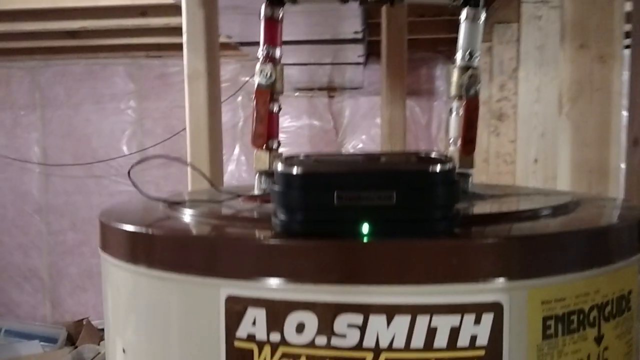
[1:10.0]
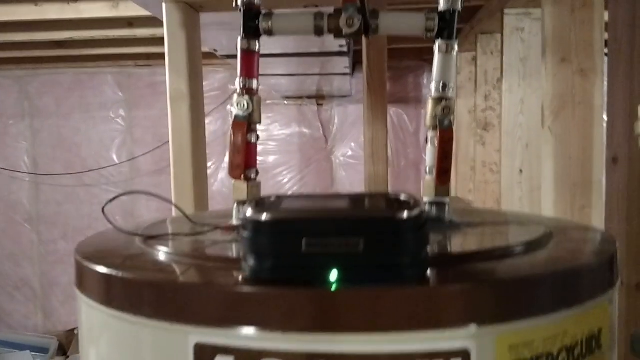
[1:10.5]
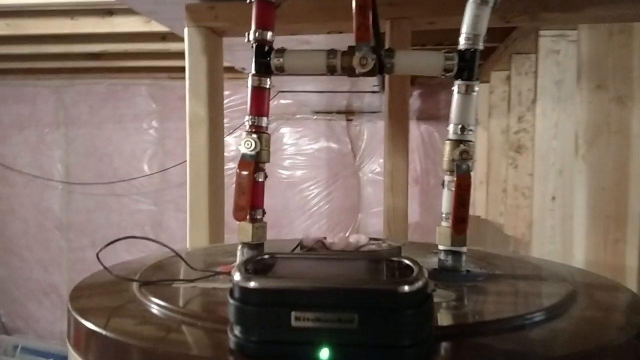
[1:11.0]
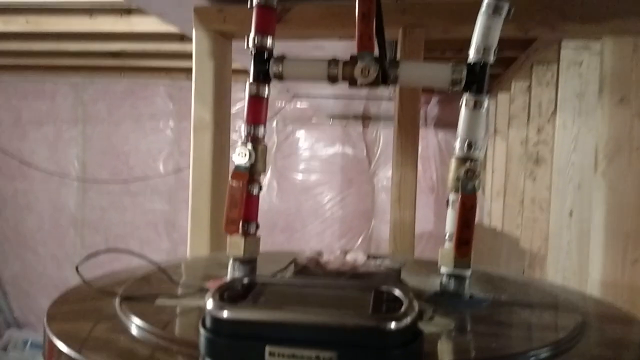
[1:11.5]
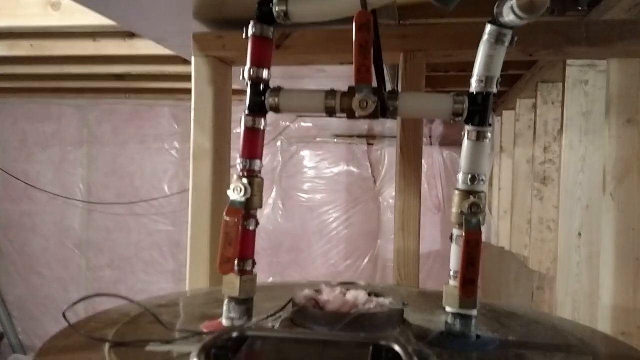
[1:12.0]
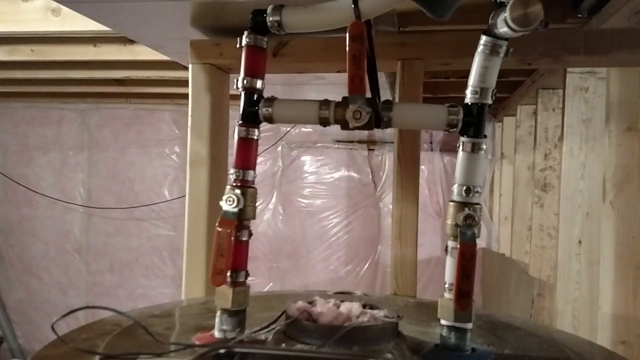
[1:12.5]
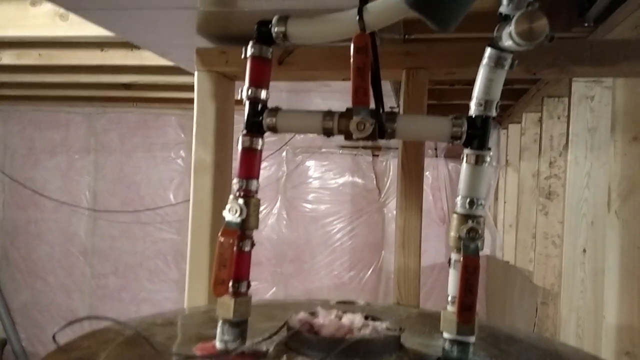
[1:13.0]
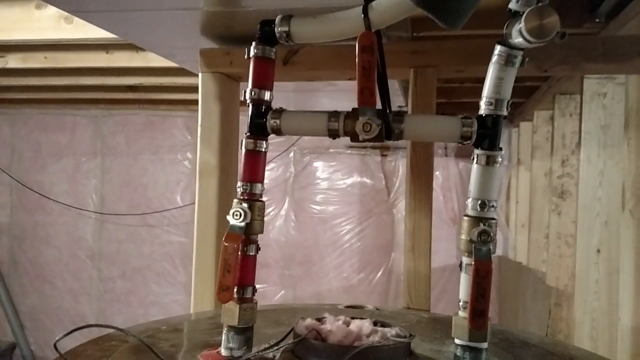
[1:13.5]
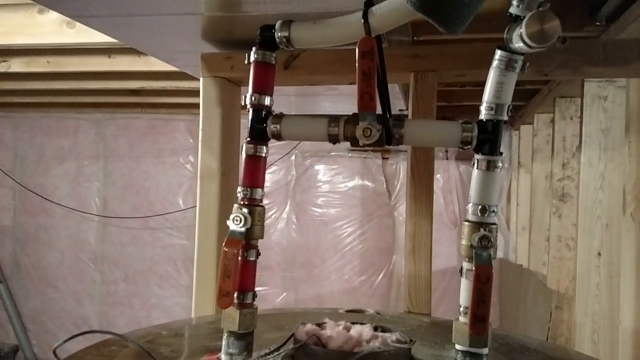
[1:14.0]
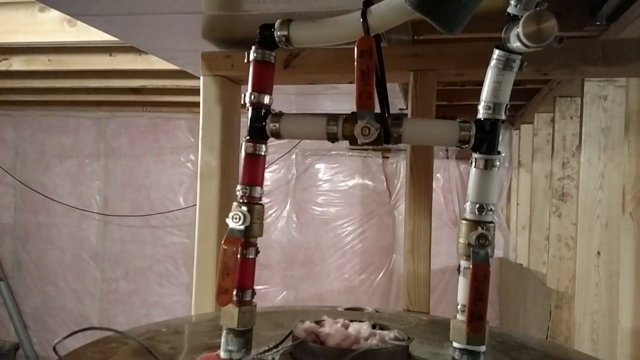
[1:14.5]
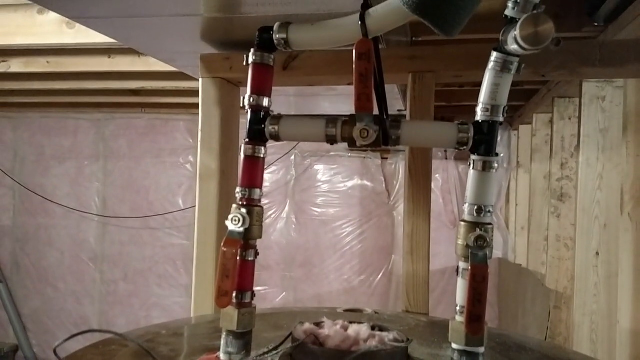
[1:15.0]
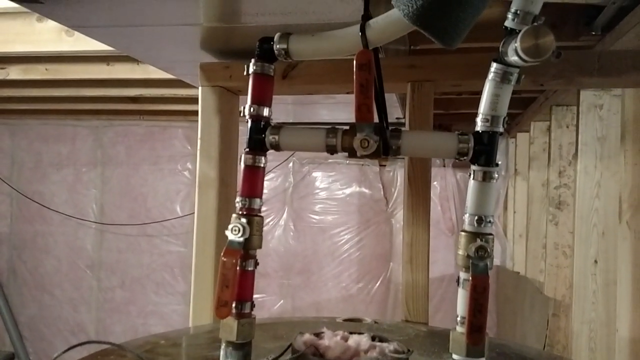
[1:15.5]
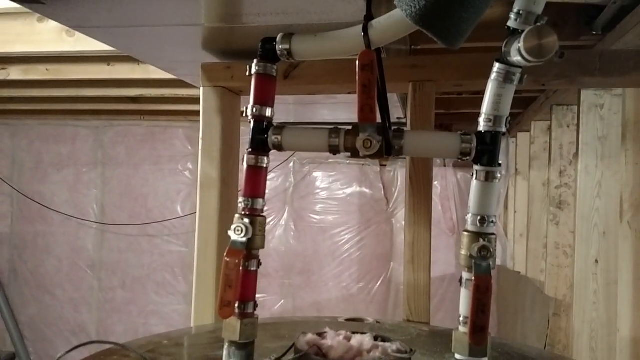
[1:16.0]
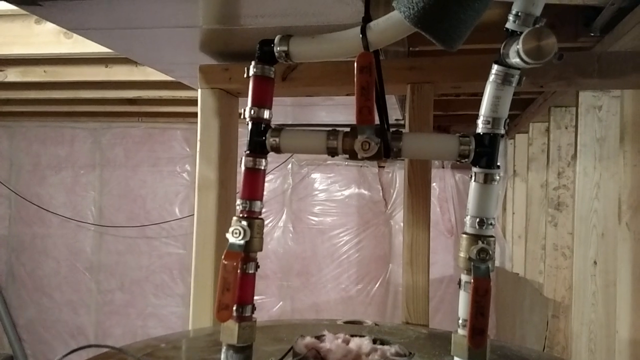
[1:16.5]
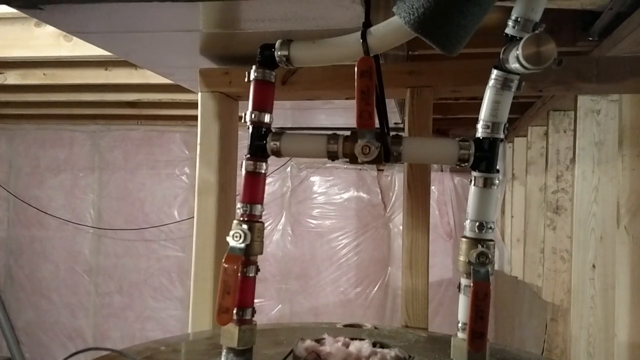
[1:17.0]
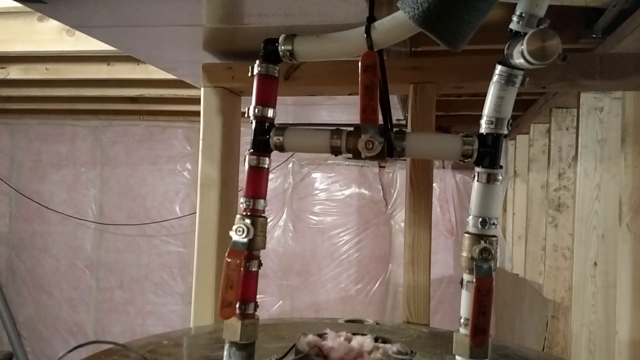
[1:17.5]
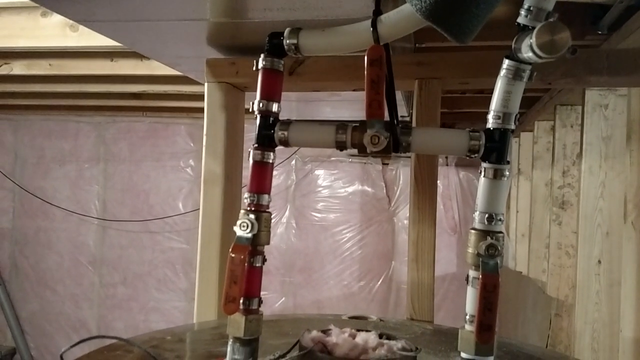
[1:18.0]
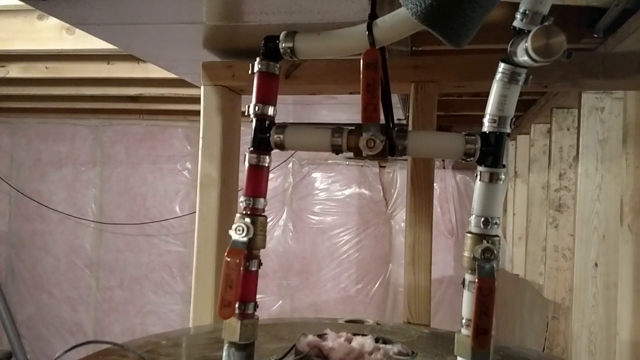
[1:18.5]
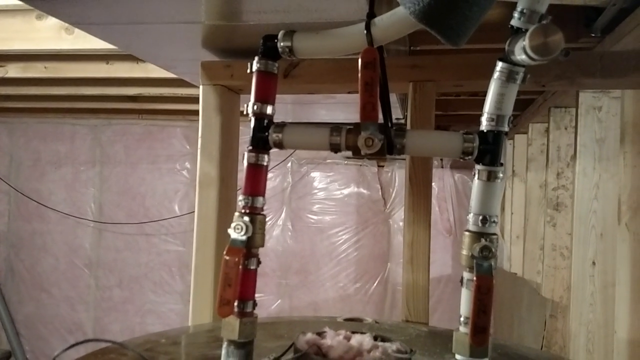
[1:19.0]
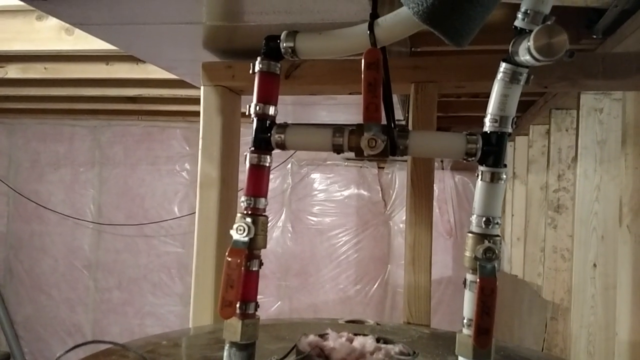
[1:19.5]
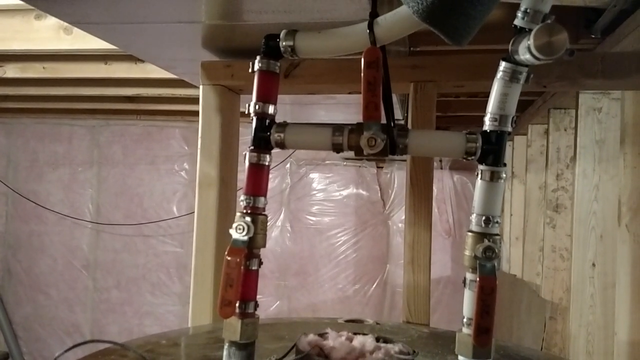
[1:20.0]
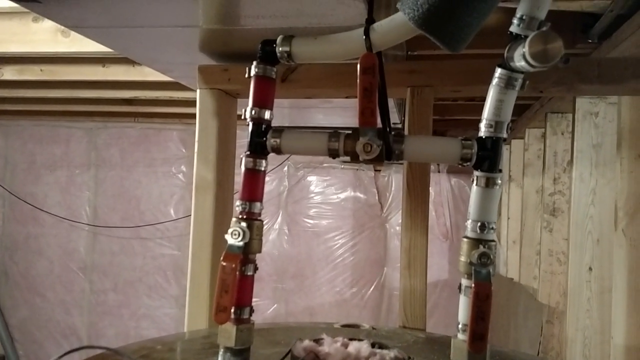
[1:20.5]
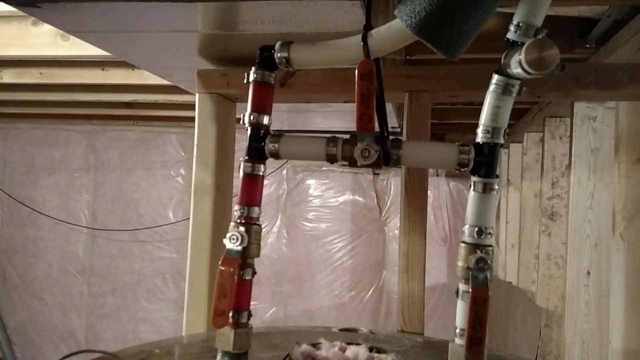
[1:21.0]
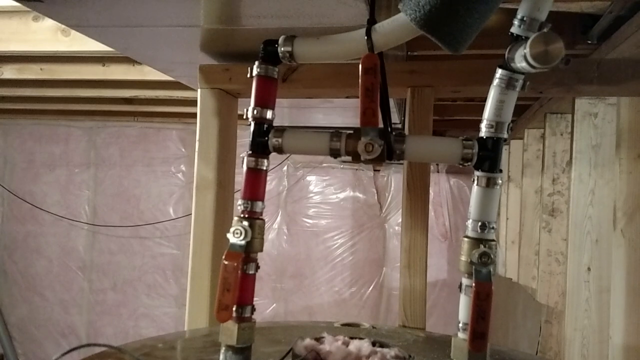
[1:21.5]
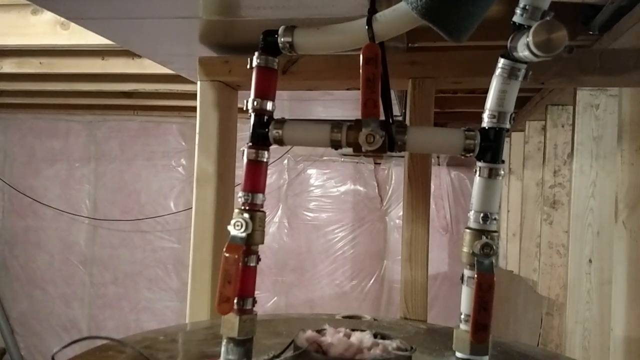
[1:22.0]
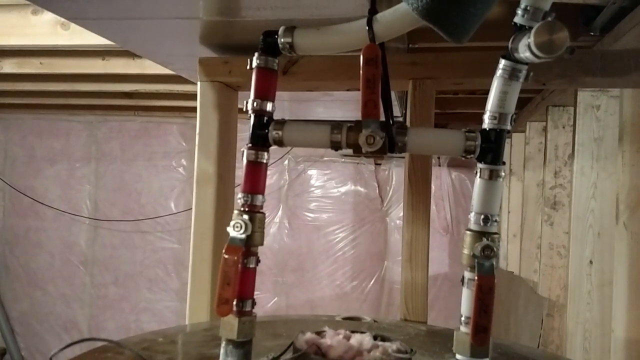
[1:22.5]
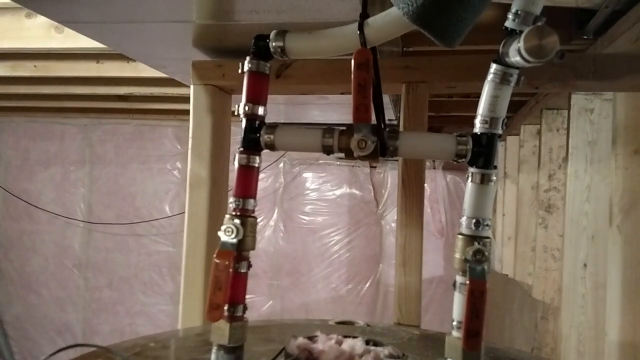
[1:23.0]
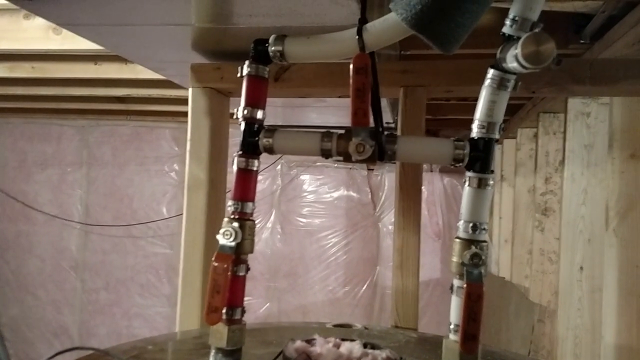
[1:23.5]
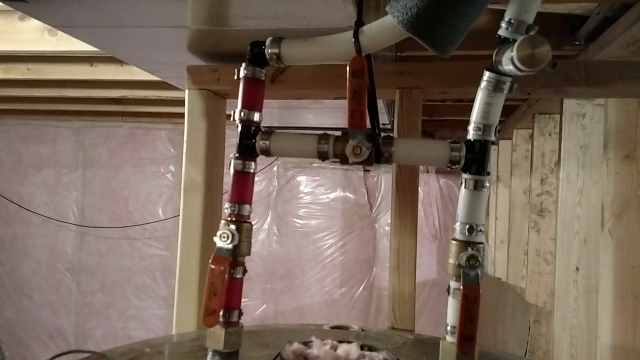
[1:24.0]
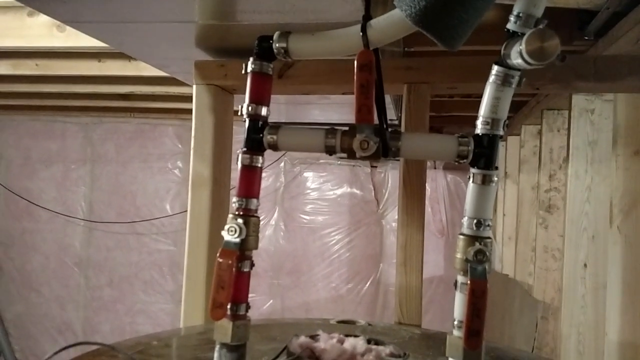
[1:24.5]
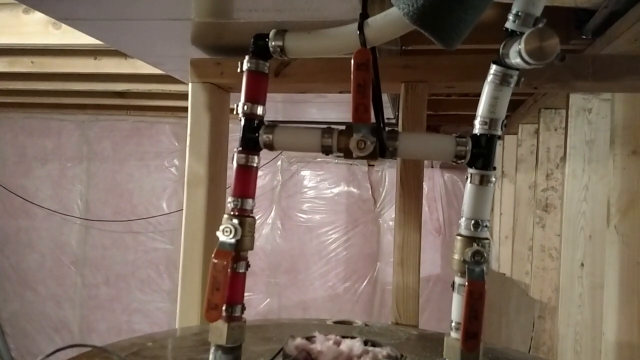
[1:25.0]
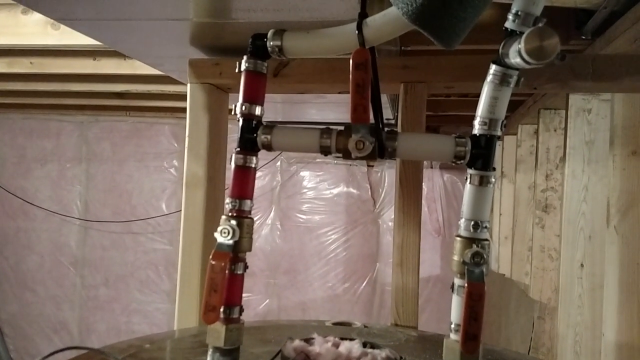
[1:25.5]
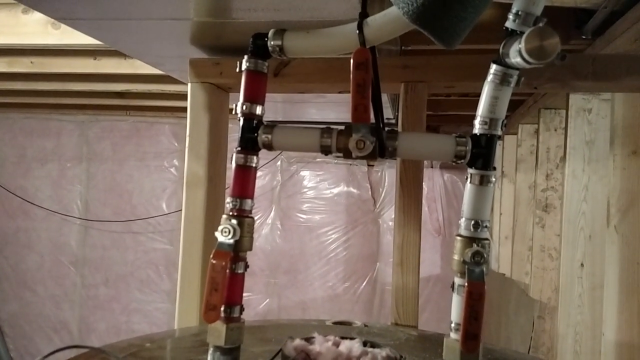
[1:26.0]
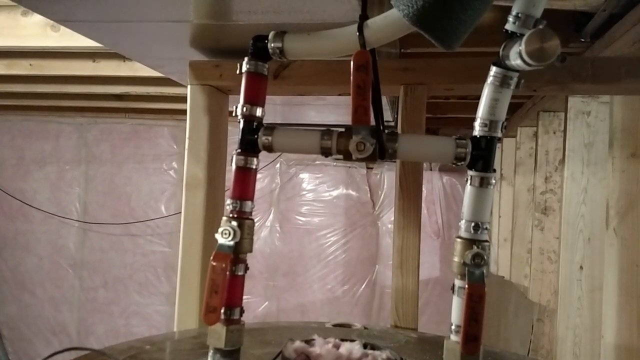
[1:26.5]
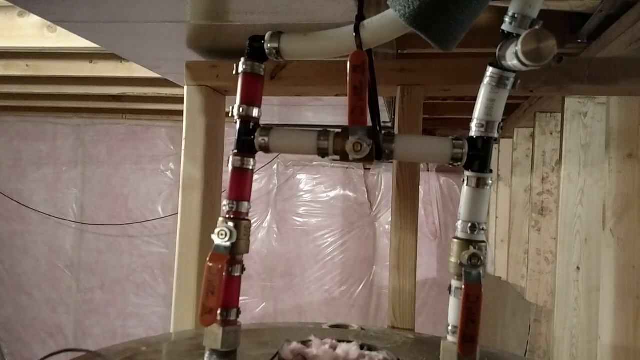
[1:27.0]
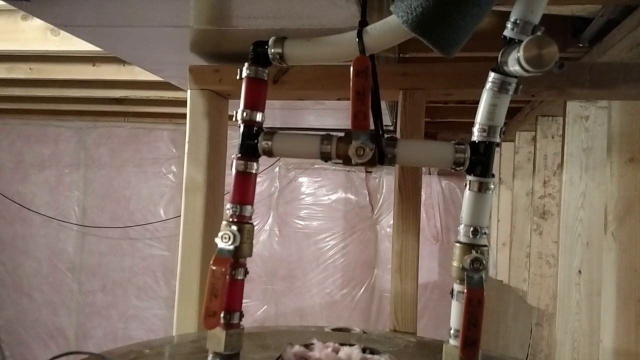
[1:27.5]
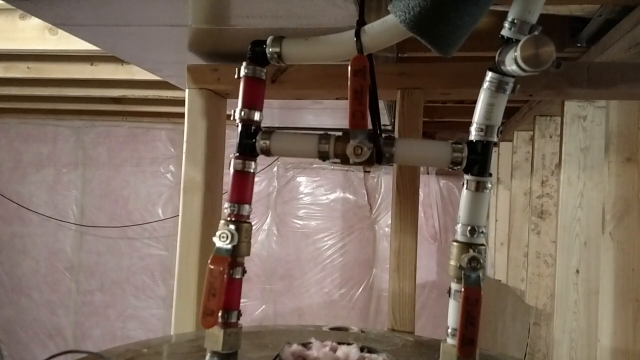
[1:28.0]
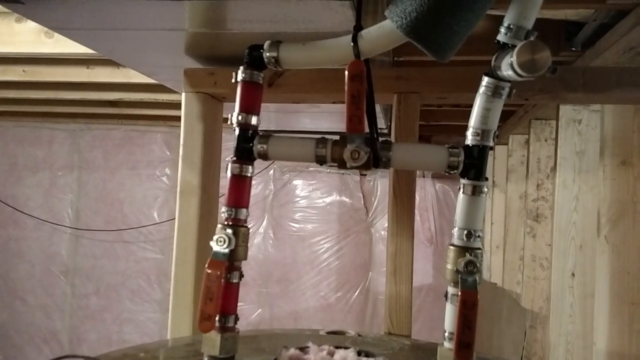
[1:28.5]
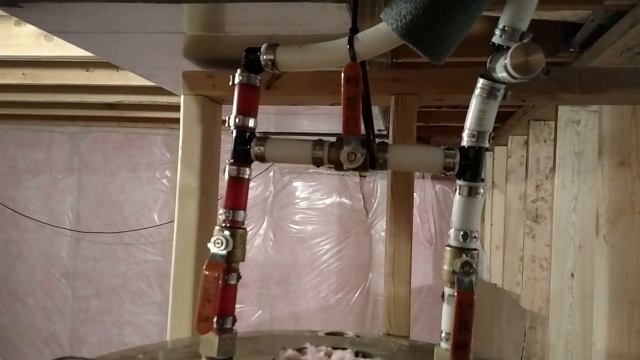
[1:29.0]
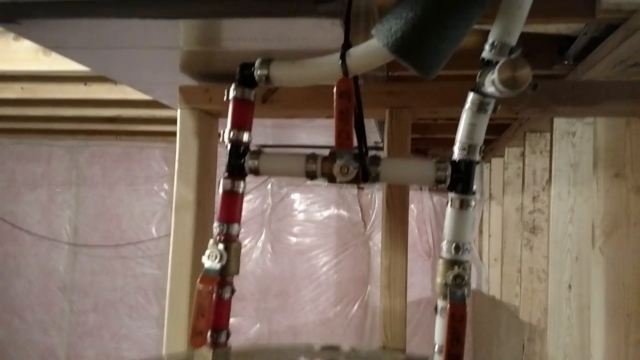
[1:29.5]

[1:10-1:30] An old-model fireplace with a well-lit fire is in a place that looks like a warehouse. On the left side of the walls there is white plastic paper serving as wallpaper. At the back of the fireplace, pipes are connected and run back to the energy source, a medium-sized tank with pipes coming from the fireplace connected to it; it looks like the energy source. The tank has a label that says "A.O. Smith", which seems to be its brand. It is also energy saving, and a black box on top of the tank has a blue light in the middle.